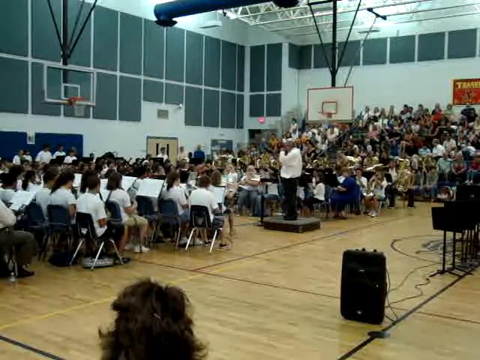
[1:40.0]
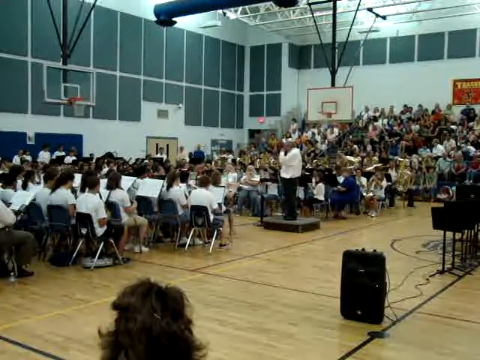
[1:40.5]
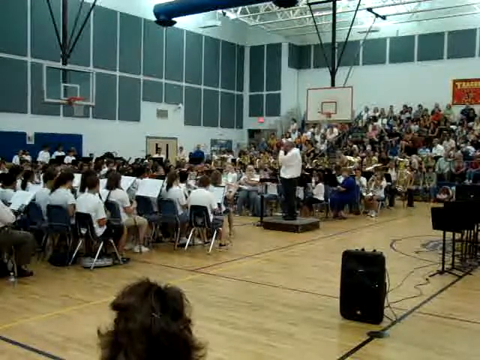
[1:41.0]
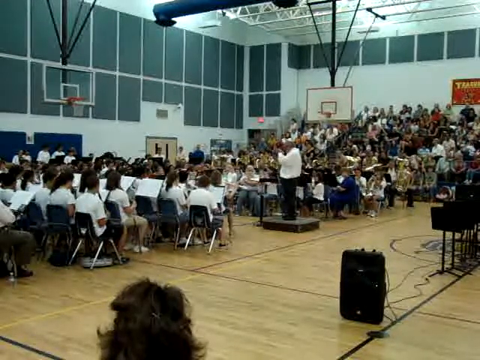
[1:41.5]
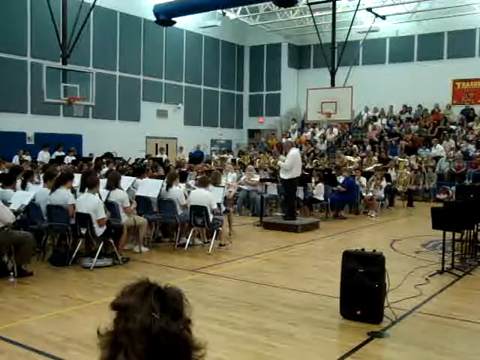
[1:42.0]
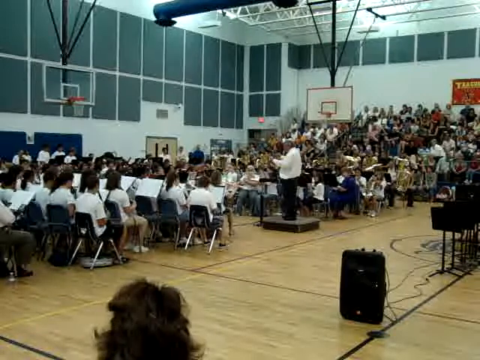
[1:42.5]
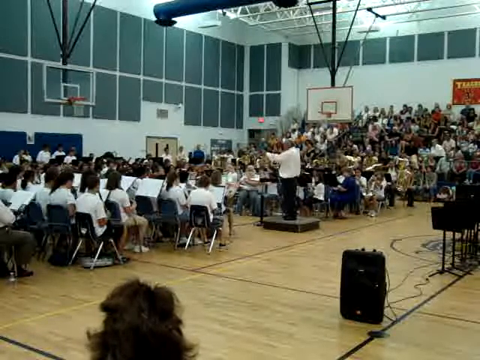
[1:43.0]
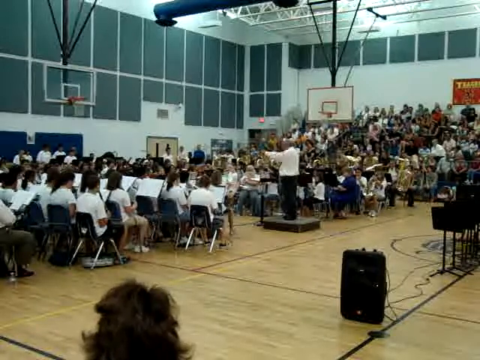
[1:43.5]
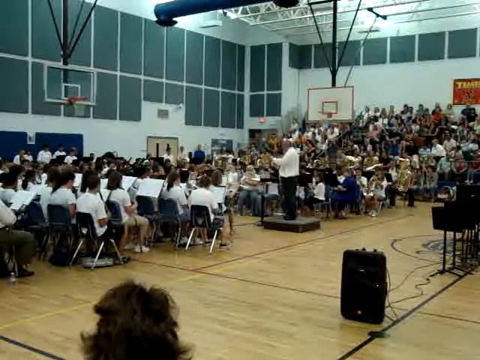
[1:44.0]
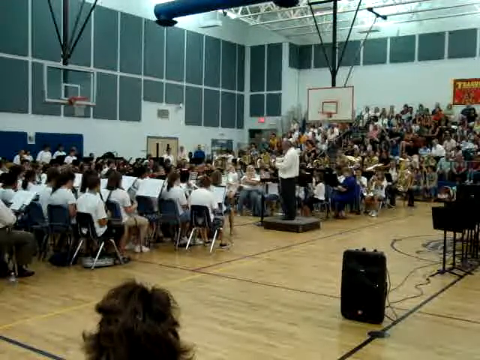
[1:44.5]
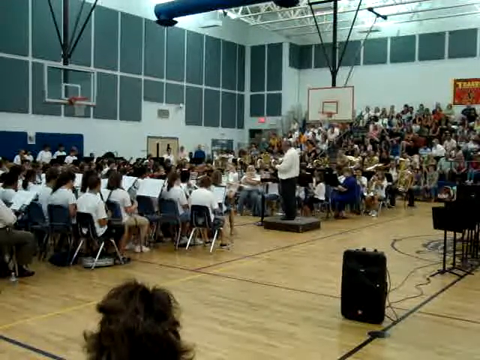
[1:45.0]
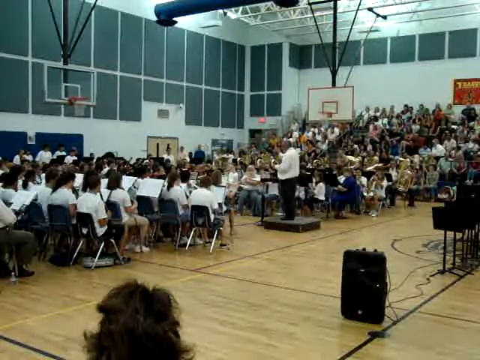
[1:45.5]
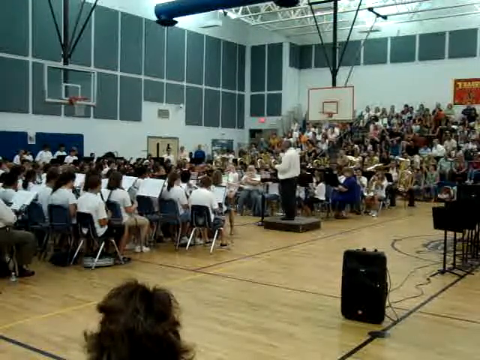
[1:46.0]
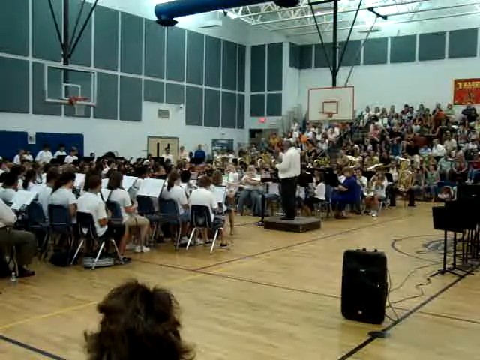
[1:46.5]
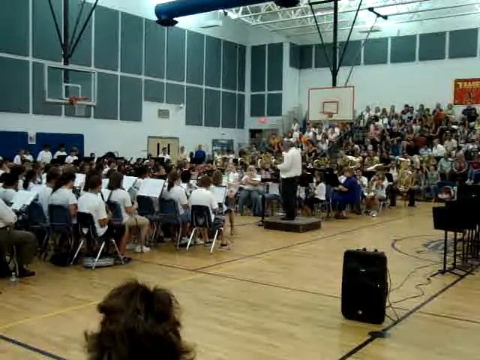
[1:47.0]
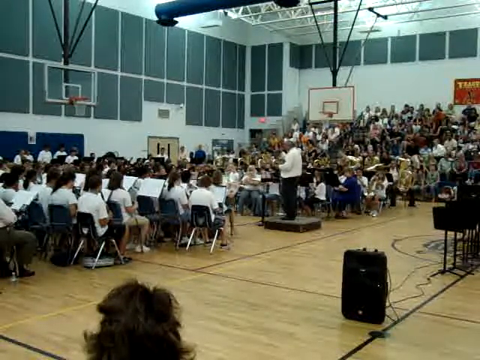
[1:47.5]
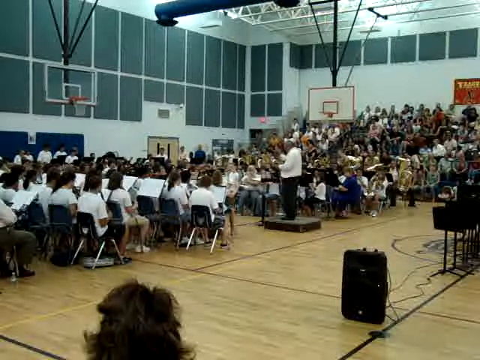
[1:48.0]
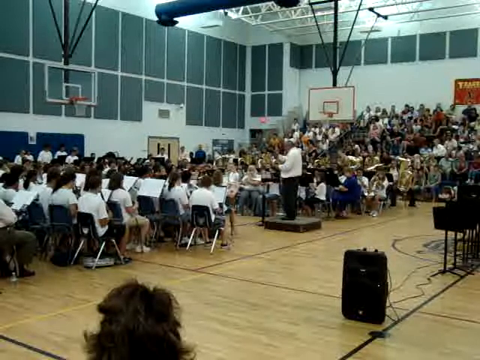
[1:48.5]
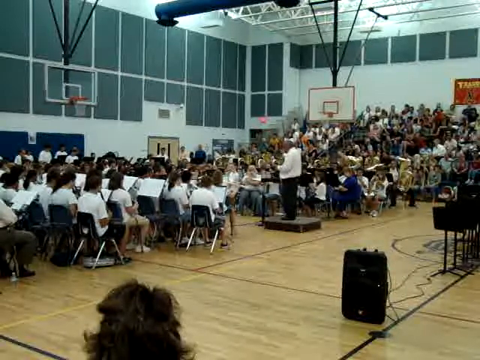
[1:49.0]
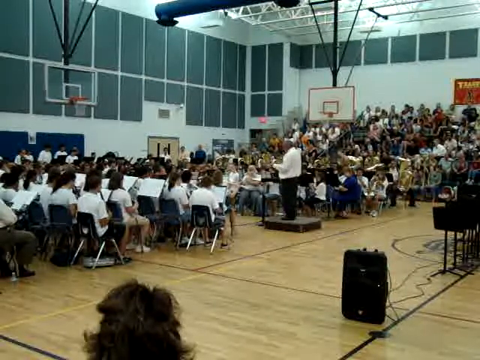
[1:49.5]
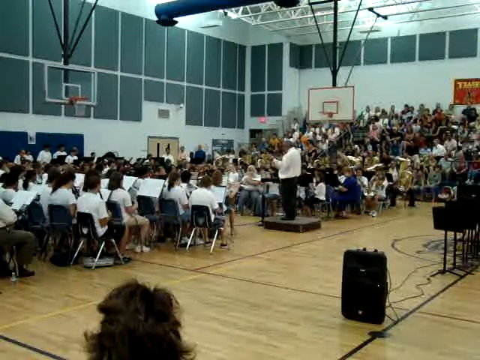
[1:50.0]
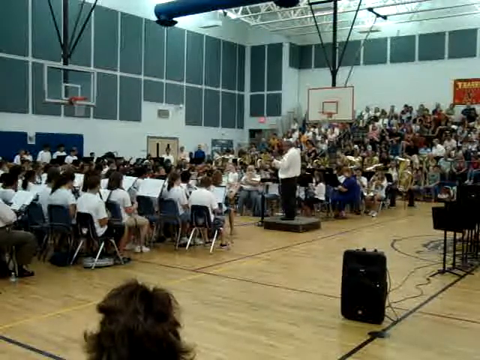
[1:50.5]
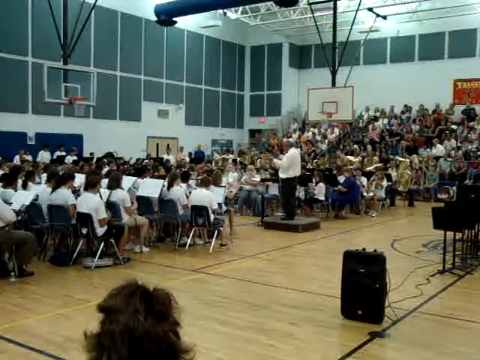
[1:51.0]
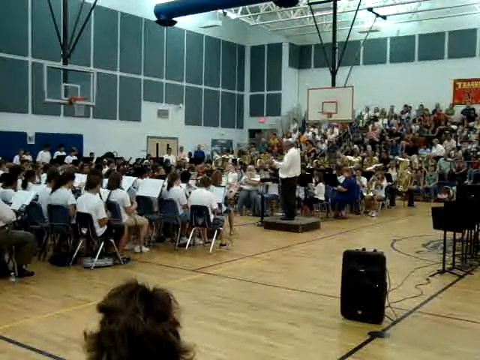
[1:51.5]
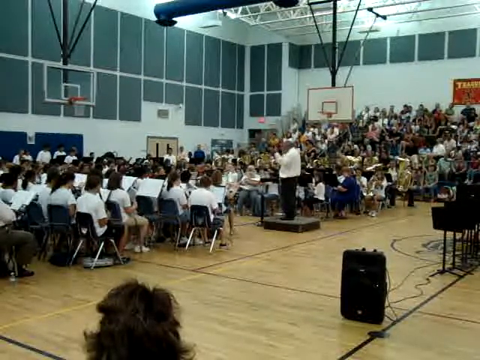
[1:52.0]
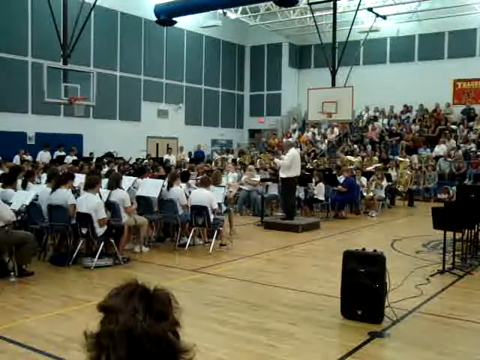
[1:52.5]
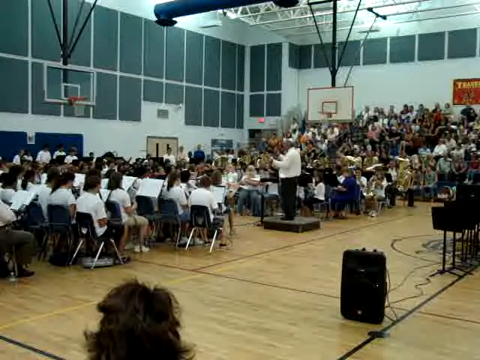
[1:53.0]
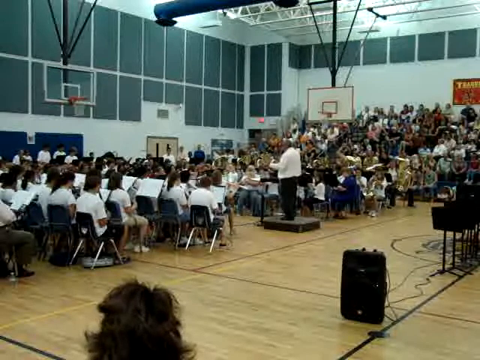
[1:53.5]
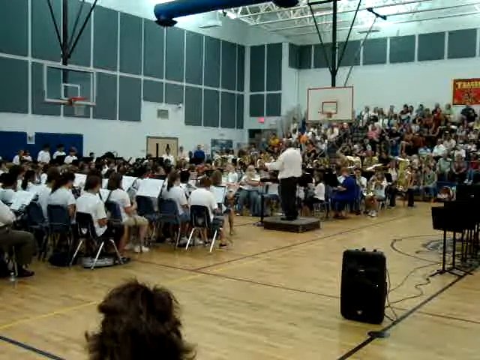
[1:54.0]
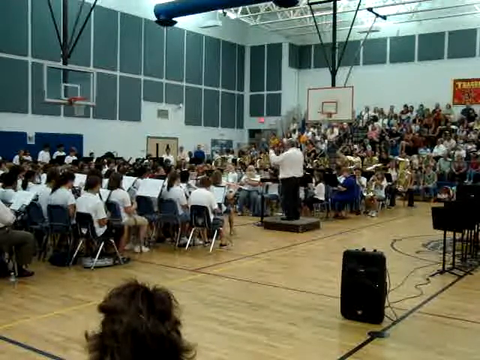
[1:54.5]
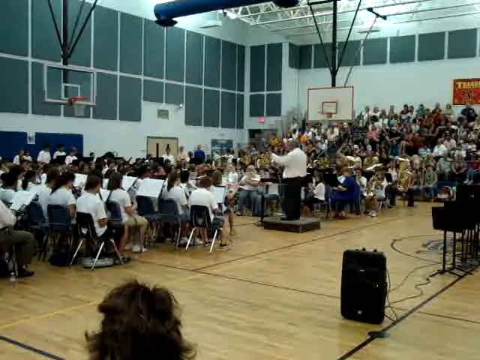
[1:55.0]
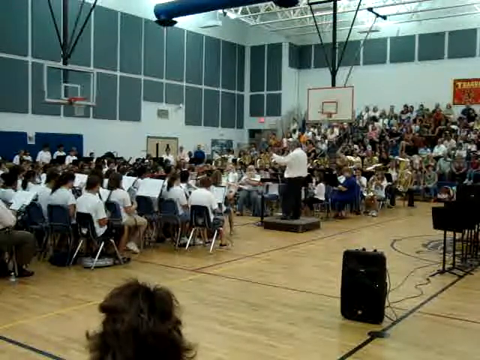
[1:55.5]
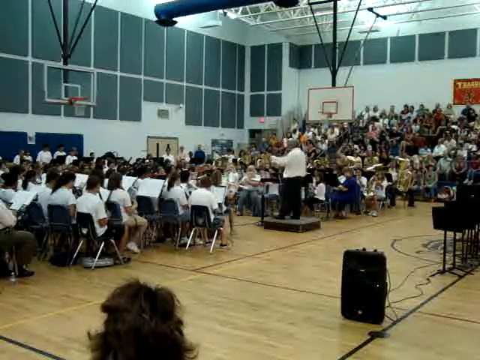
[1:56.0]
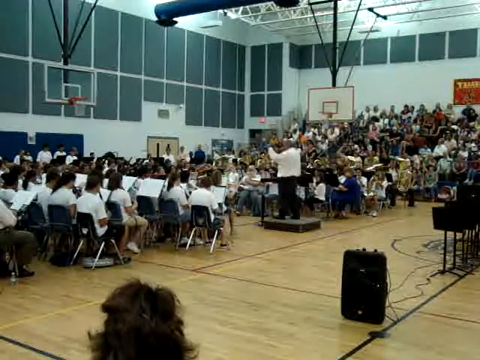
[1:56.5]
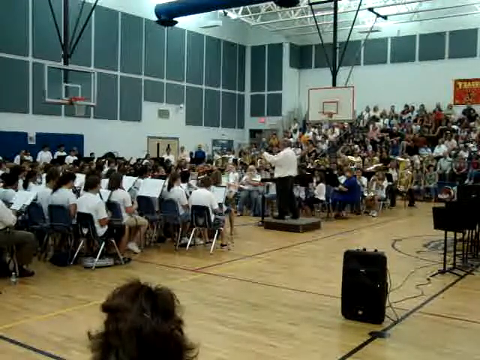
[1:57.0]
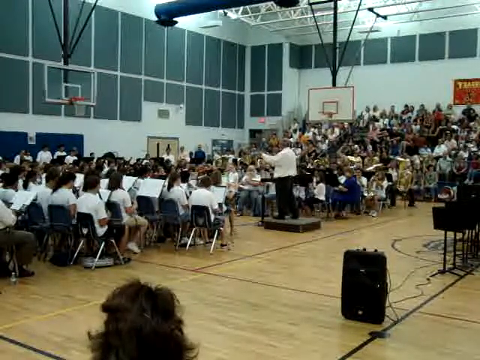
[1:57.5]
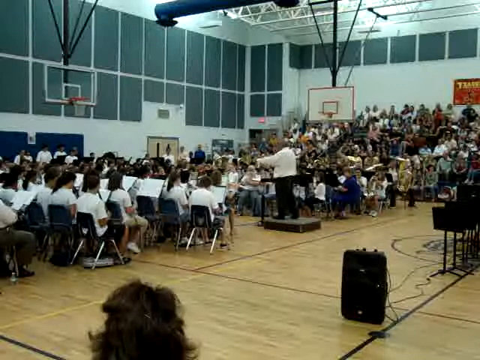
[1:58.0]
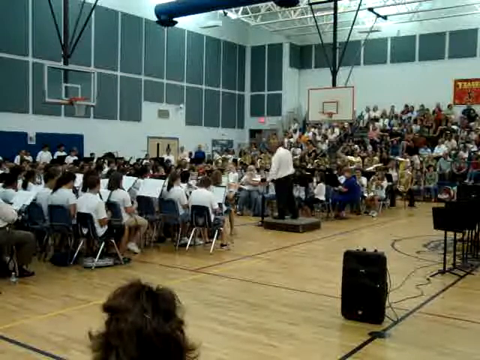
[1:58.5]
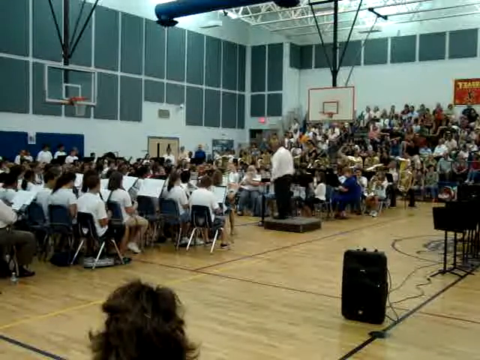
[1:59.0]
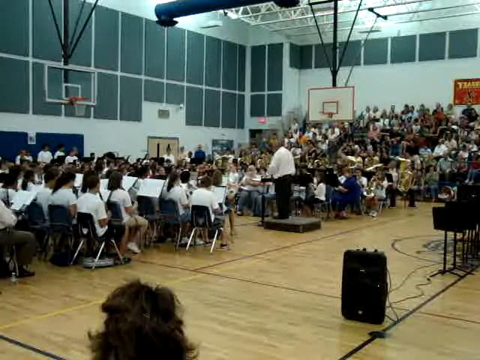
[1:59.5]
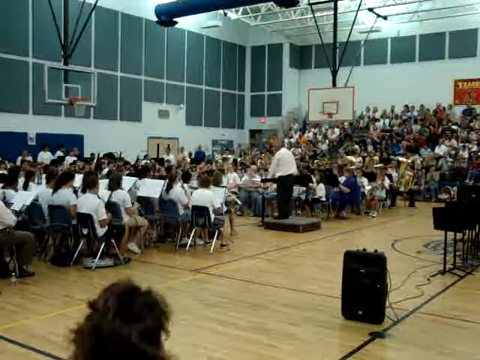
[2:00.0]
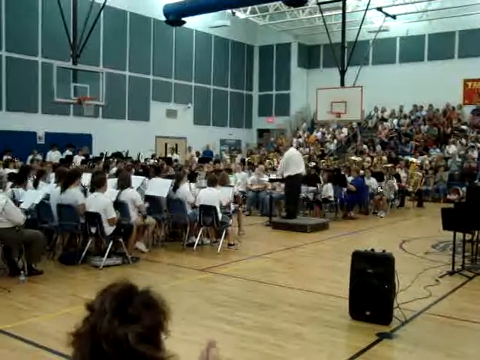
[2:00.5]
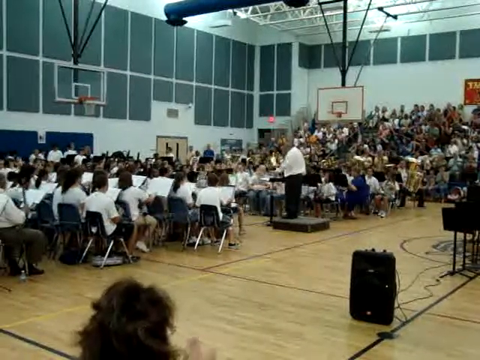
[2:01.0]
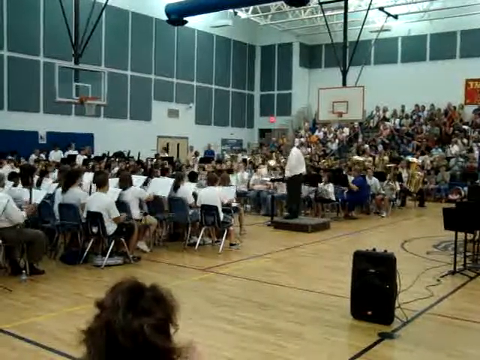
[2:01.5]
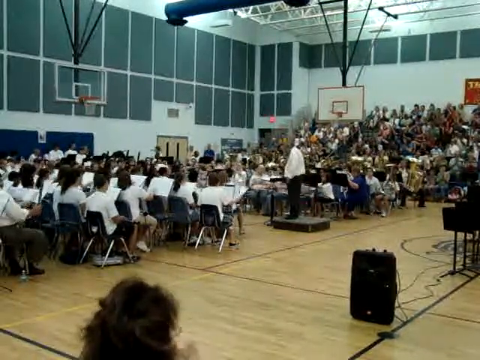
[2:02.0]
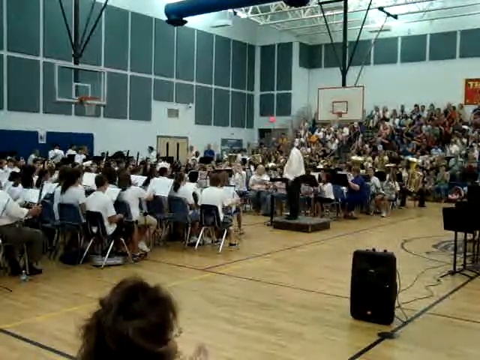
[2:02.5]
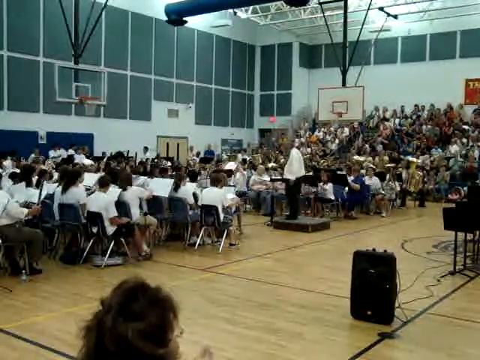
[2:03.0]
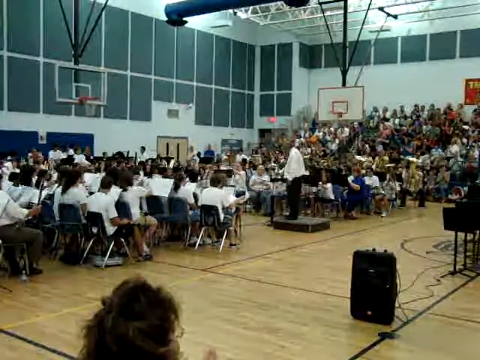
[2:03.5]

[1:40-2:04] A bunch of children in a gym setting sit on blue chairs, with a stand in front of them holding music sheets and a variety of different types of instruments. A man wearing white and black, the composer, helps assist the children with their performances. There is a white and red basketball hoop, as well as a clear basketball hoop that is also red. A bunch of green tiles are on the wall. A door is in the distance, along with an exit sign. The composer moves his arms a lot to help guide the children. A bunch of people sit in the bleachers in the background. A big black speaker is on the floor, and a person's head is at the bottom of the video, watching. The camera moves just a little bit, and at the end the kids look like they are moving to another sheet of music to play.